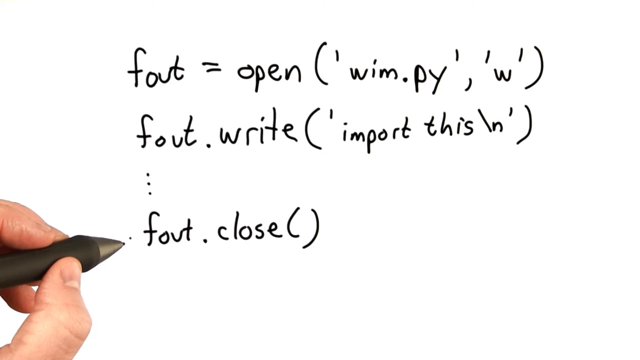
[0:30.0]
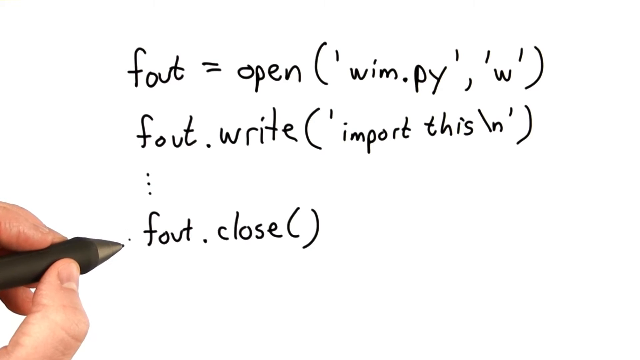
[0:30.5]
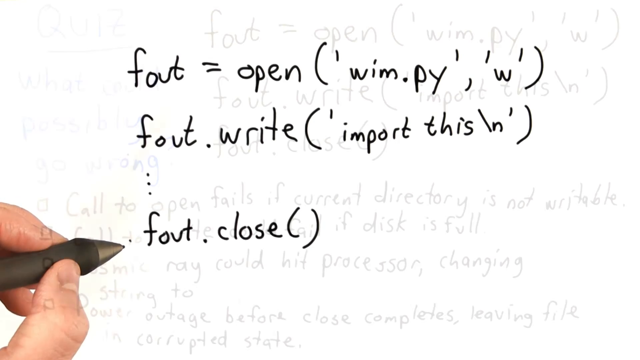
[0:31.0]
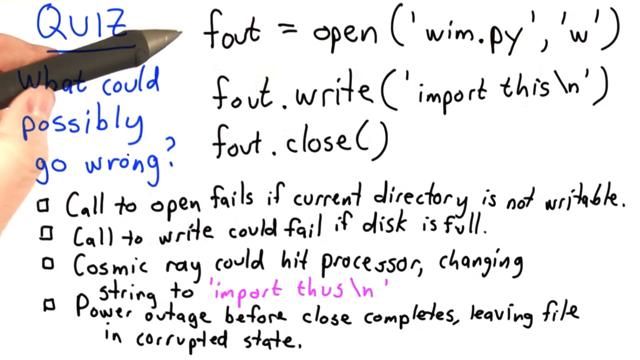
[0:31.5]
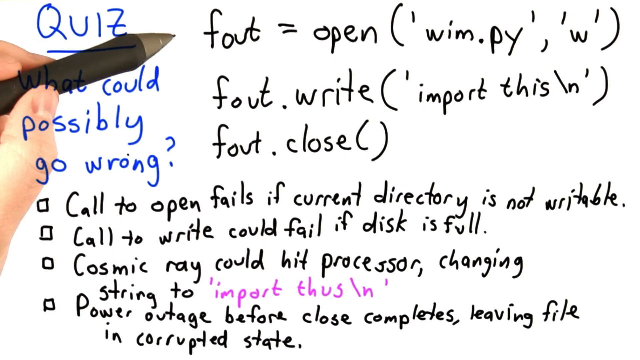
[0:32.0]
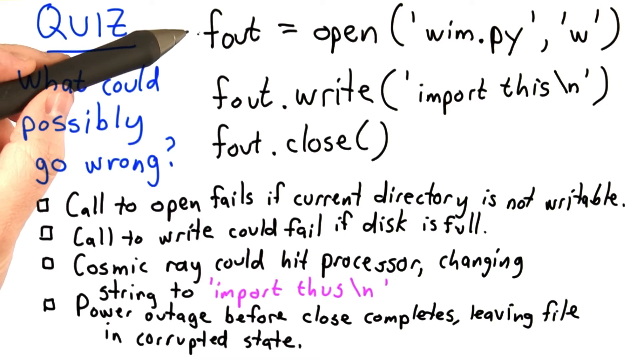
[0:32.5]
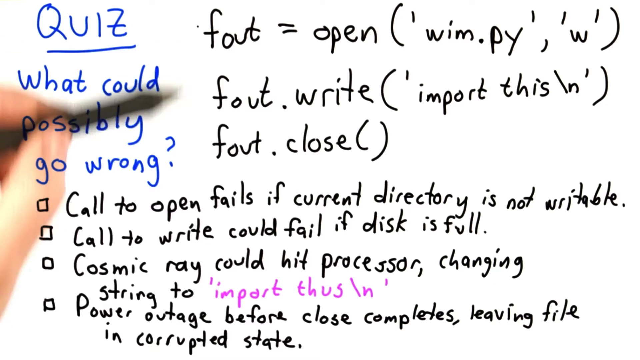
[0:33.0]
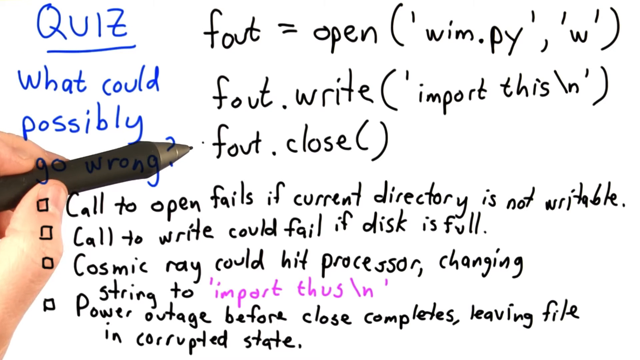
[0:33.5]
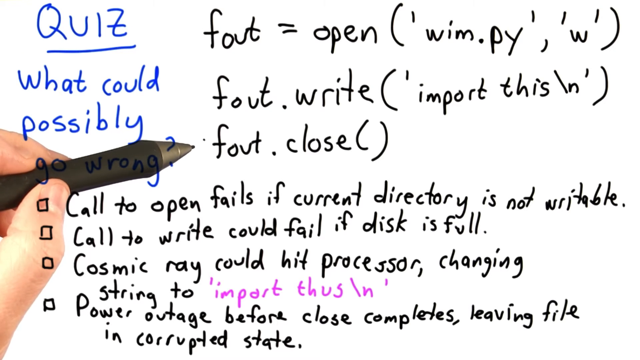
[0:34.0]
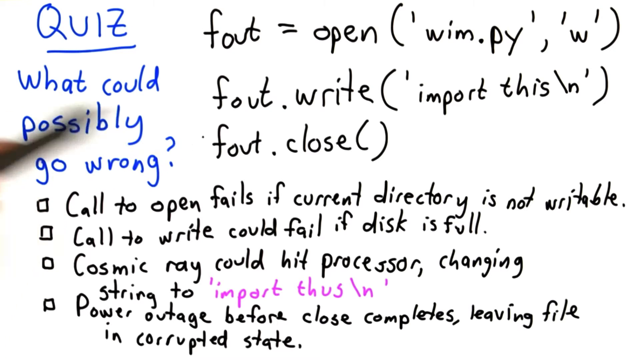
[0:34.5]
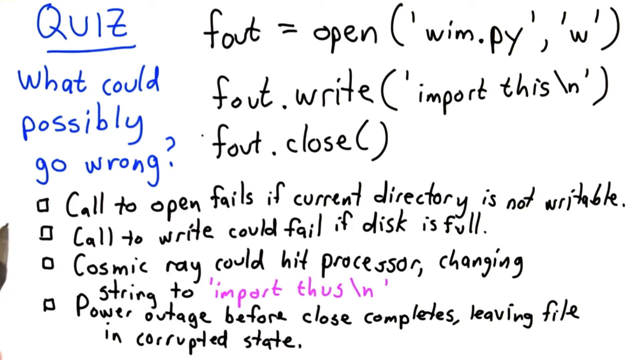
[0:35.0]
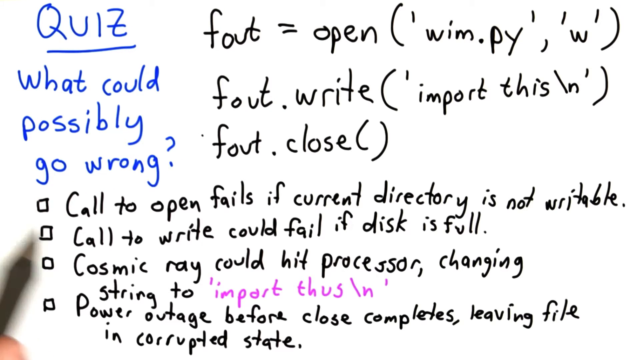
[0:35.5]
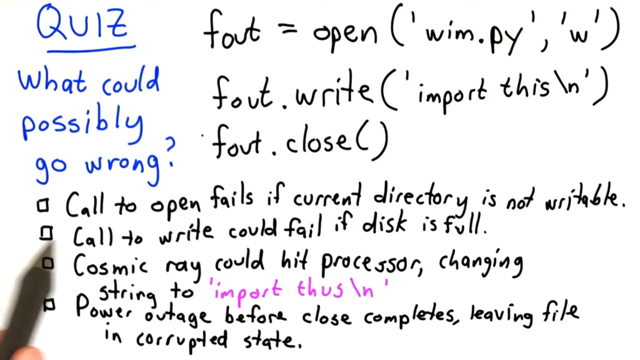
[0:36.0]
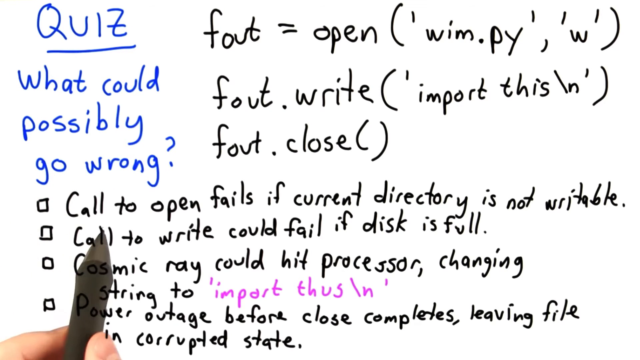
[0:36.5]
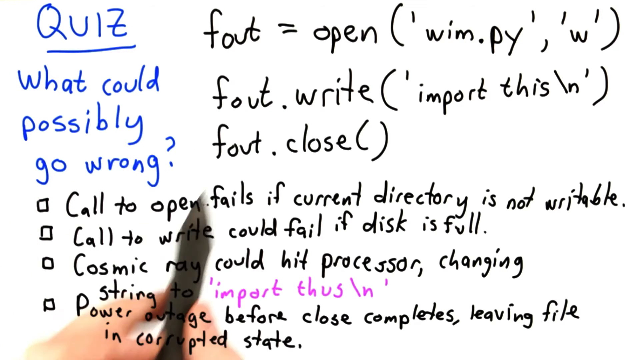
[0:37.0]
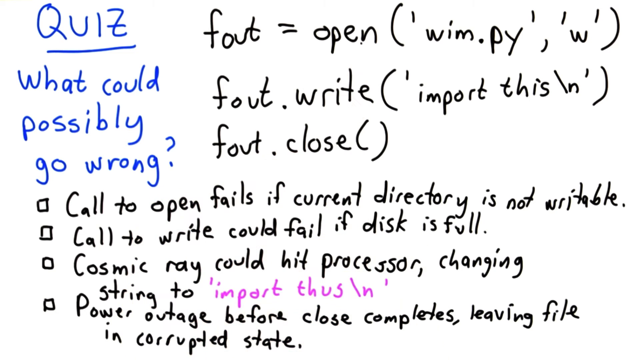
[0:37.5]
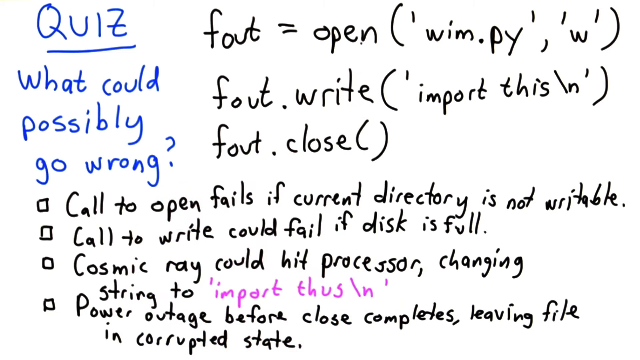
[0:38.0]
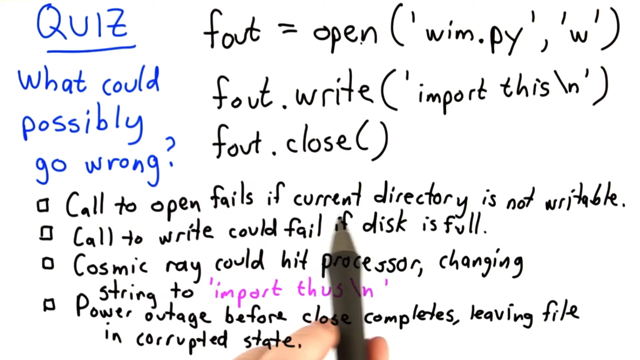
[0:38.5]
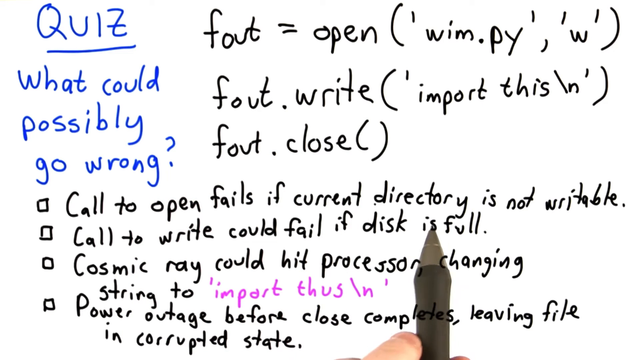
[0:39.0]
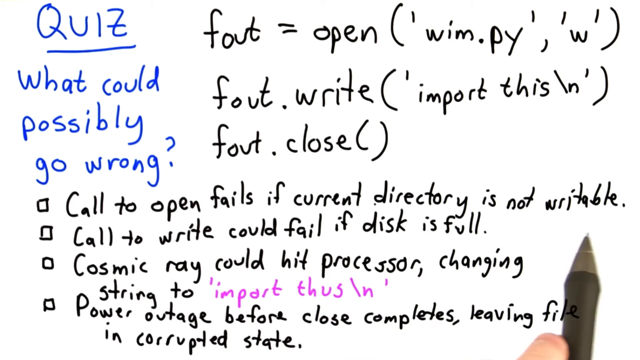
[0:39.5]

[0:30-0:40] The writing continues with the word "quiz" and the question "what could possibly go wrong?" The opening "open" line written at the beginning is visible. Below it are listed options: "call to open fails if current directory is not writable", "call to write could fail if disk is full", an option about something that could hit the processor, and "power outage before close completes".